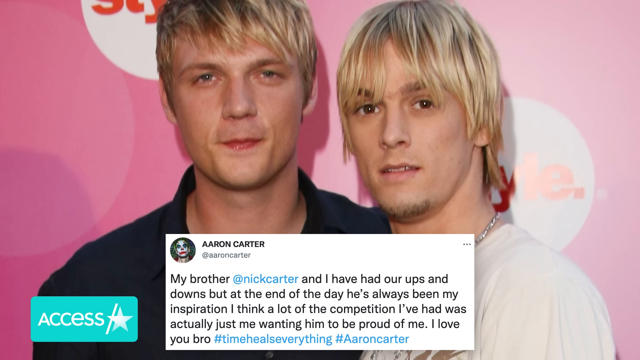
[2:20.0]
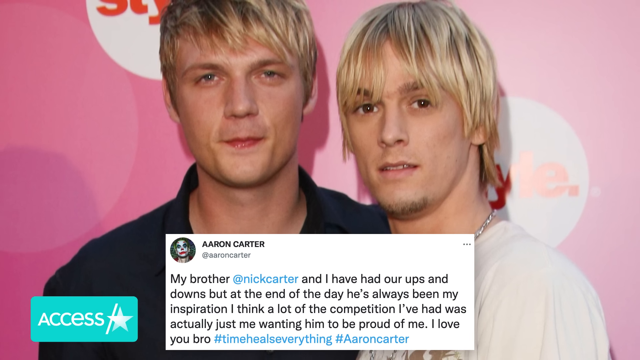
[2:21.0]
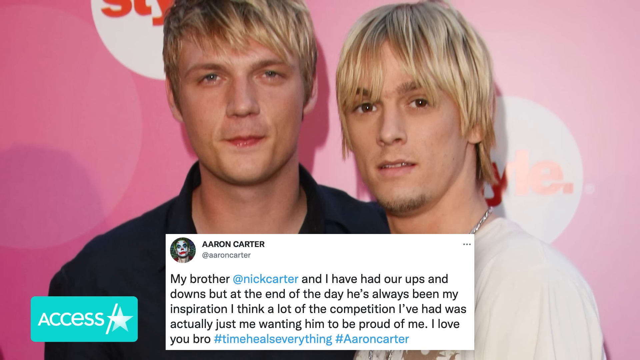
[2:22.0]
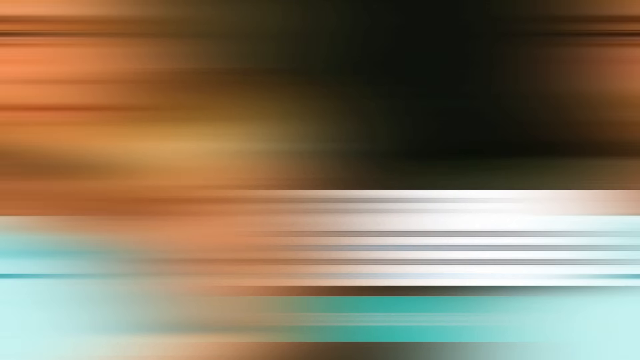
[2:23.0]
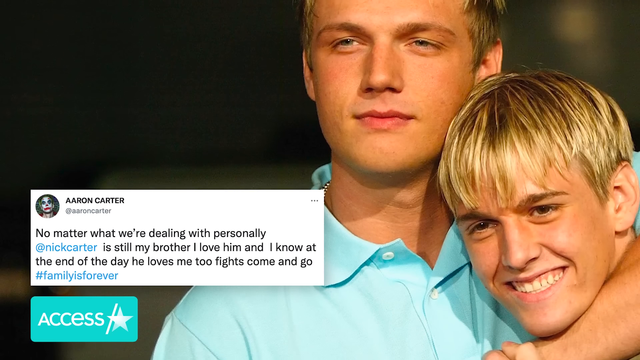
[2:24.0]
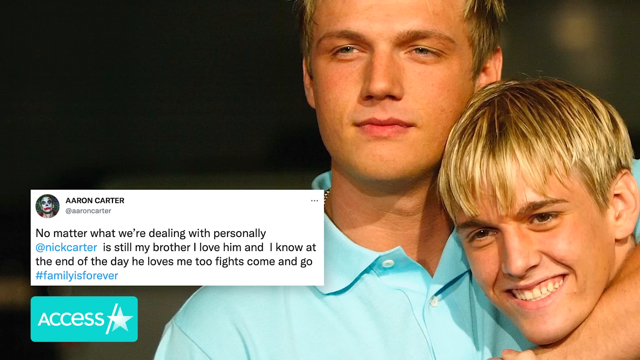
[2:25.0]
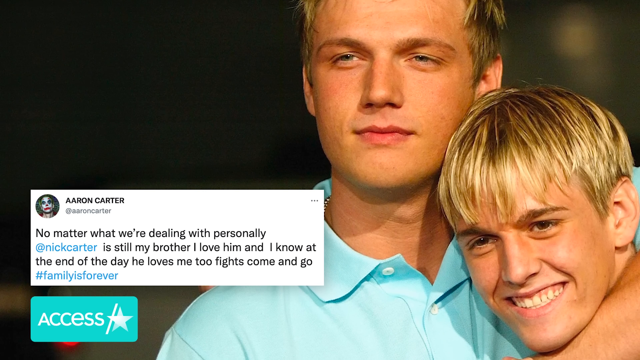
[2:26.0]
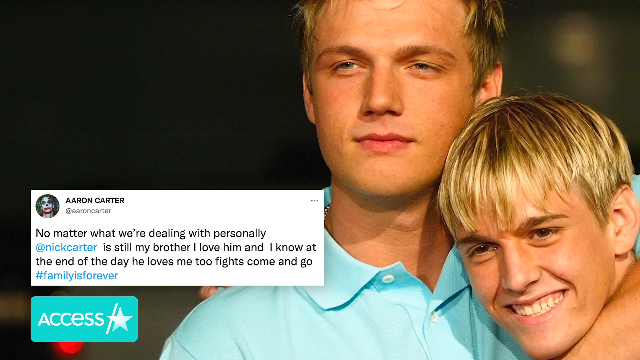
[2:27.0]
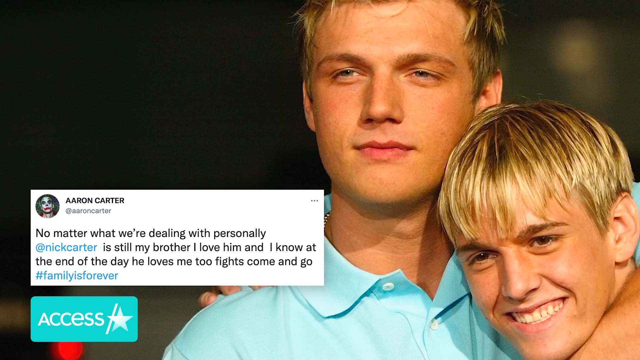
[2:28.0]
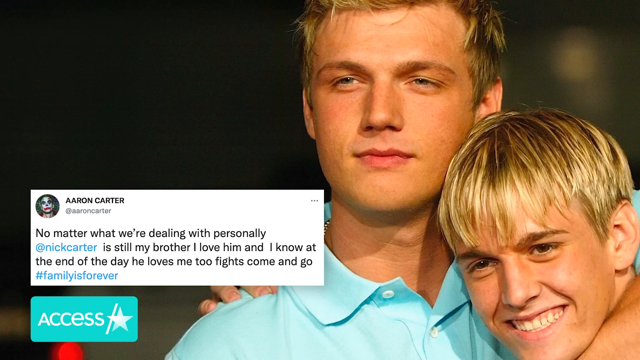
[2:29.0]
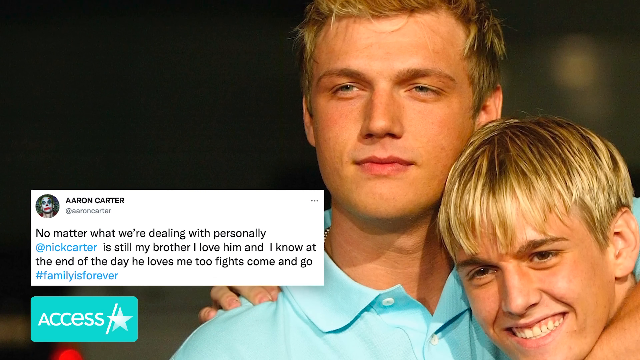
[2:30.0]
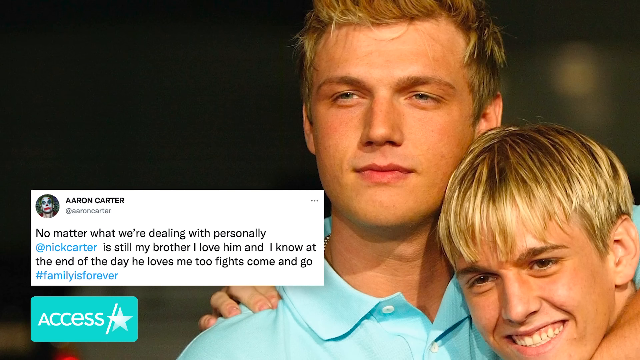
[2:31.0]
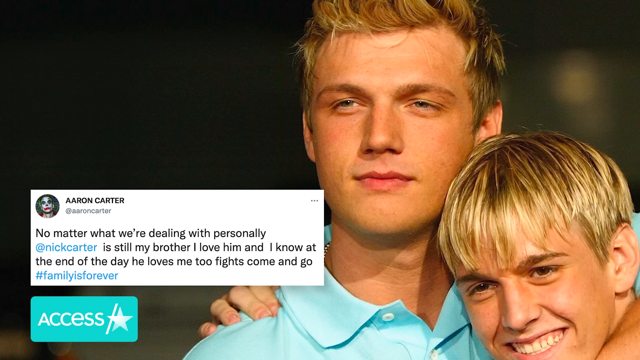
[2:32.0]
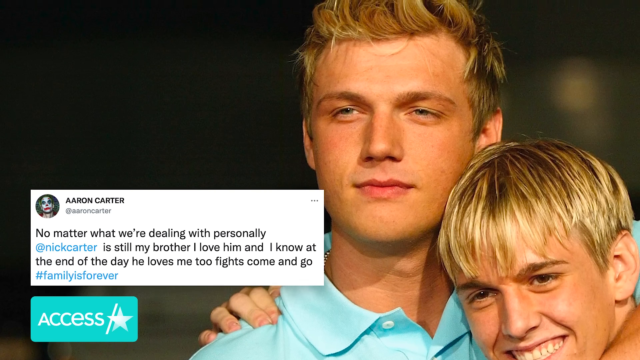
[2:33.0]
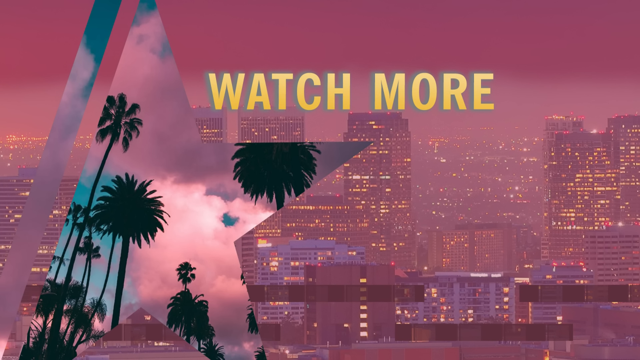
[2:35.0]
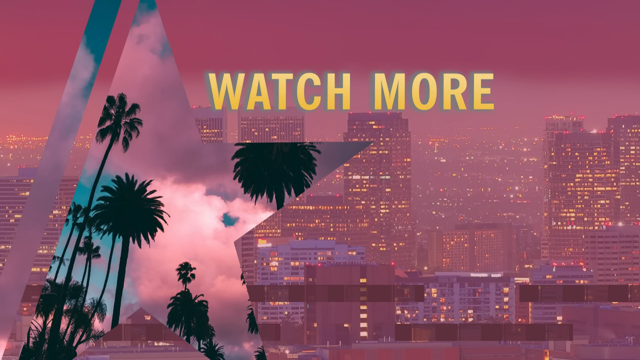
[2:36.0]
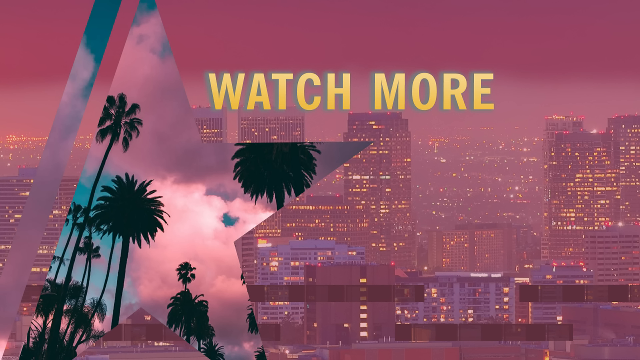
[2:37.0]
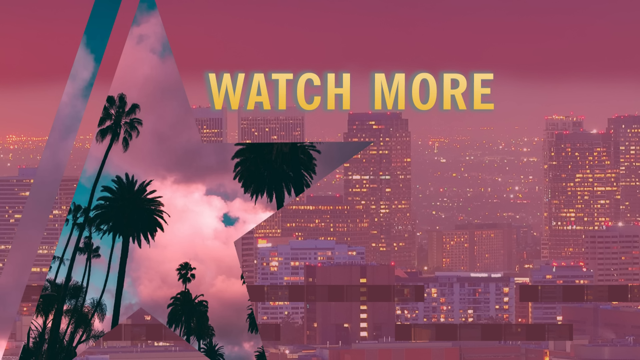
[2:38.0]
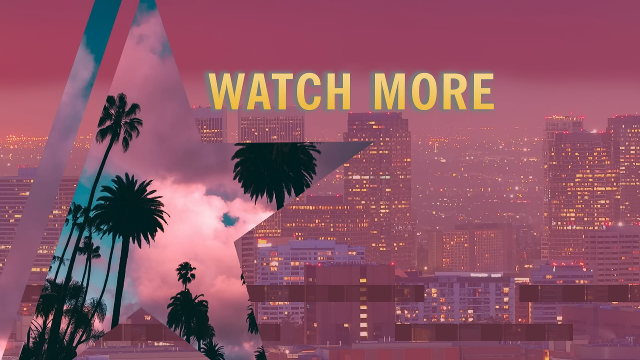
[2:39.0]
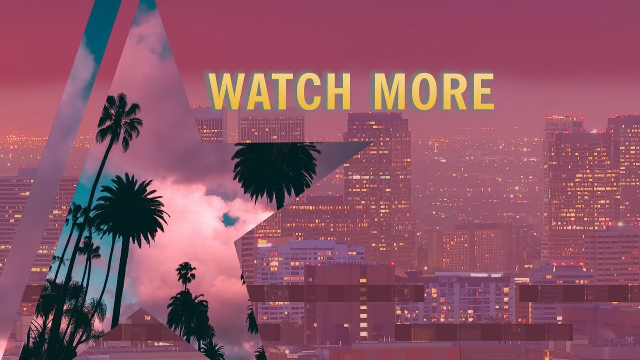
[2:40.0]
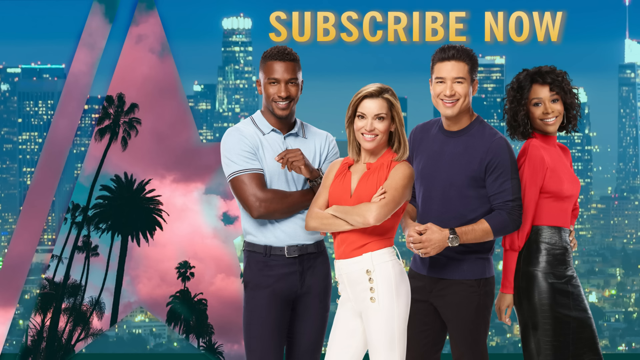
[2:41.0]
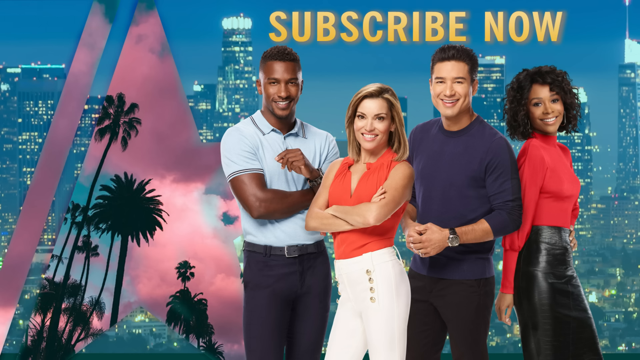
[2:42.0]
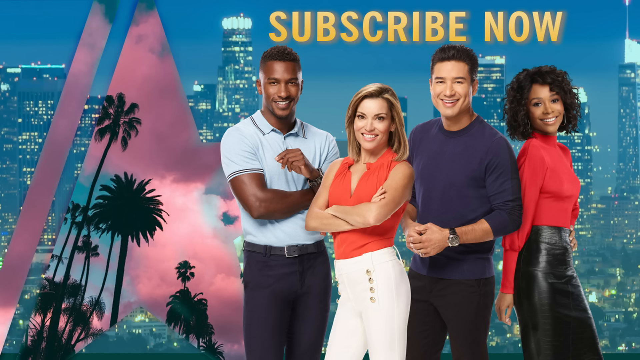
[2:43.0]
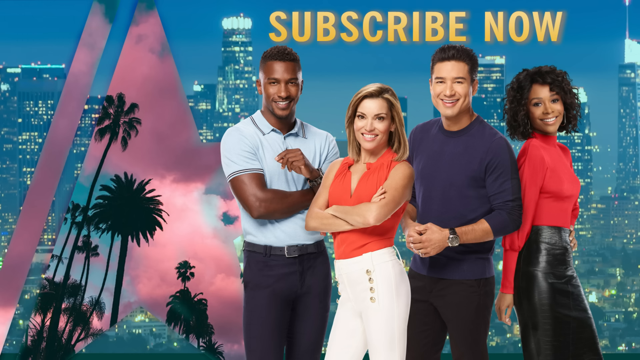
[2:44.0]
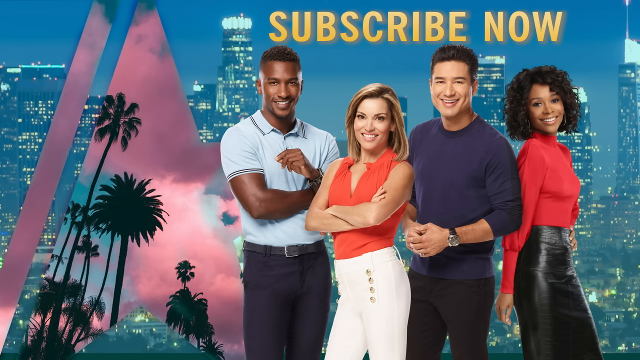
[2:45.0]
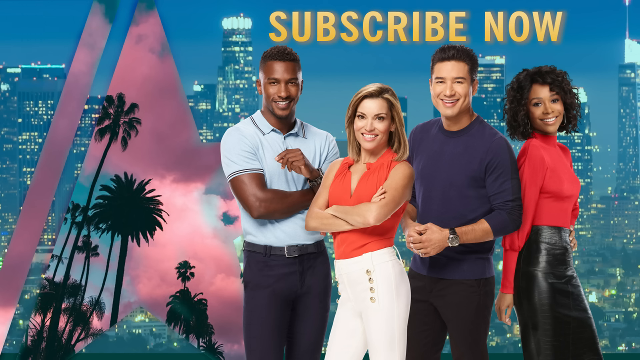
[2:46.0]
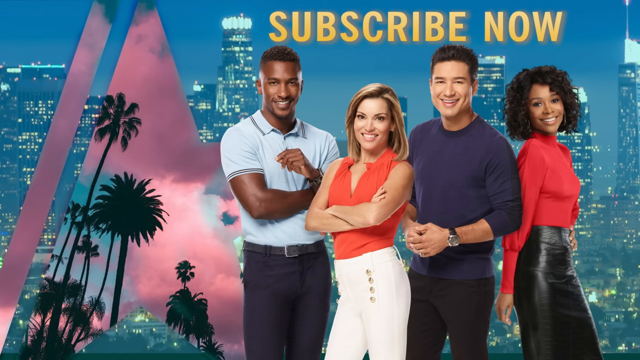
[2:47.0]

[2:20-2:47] Aaron Carter and Nick Carter are together at some sort of event, with a tweet by Aaron Carter himself at the bottom. The scene shifts to Aaron Carter and Nick Carter together on the right side: Nick Carter holds on to Aaron Carter, wrapping his arm around his neck and hugging him, and Aaron Carter has a big smile showing his teeth. Another tweet appears on the left side, in which he mentions how important it is to appreciate family and how he is dealing with the issues with his brother but still loves him. At the end, a yellow caption at the top center reads "watch more." A large star is on the left side with palm trees inside it, and in the background is a city landscape with multiple large buildings; the whole scene is purple, light purple. The scene then shifts to what looks like the team of Access Hollywood: four people, two men and two women, with the caption "subscribe now" above them and a city landscape of large tall buildings and skyscrapers in the background.